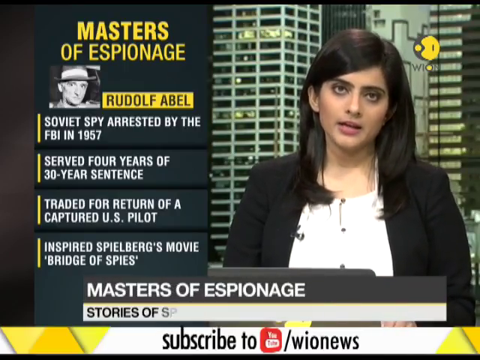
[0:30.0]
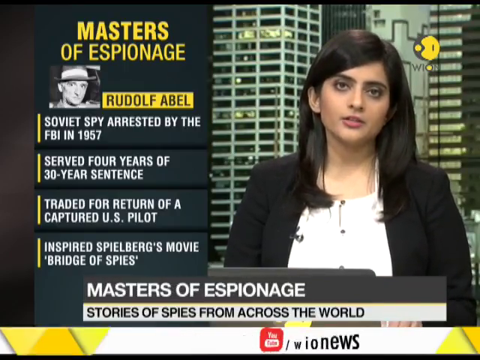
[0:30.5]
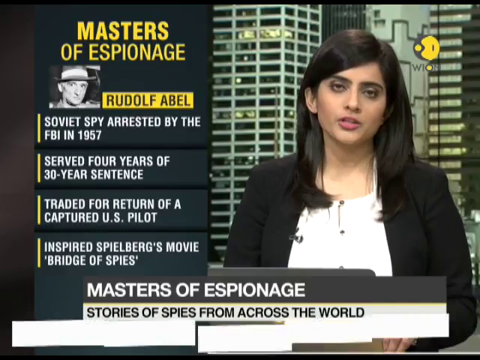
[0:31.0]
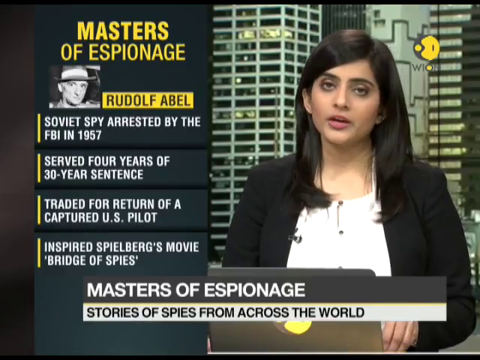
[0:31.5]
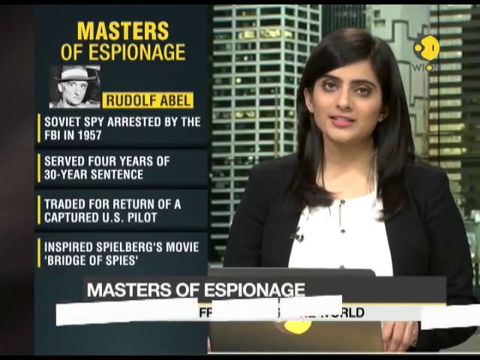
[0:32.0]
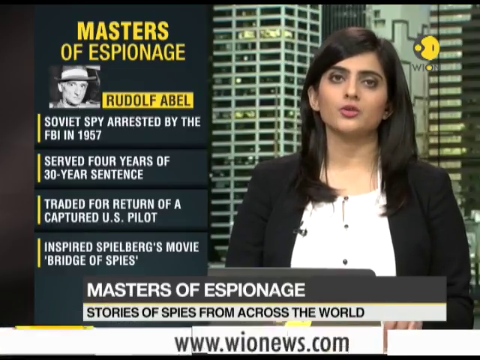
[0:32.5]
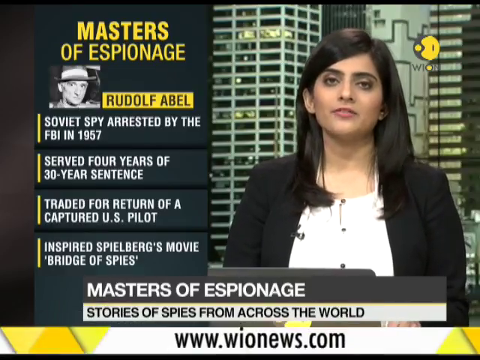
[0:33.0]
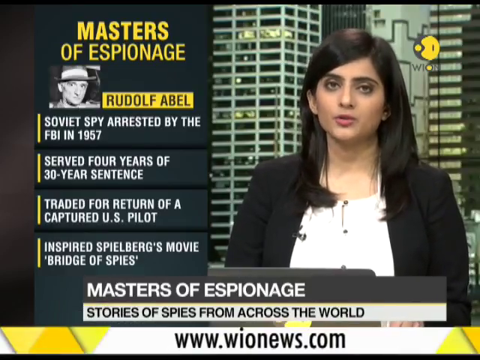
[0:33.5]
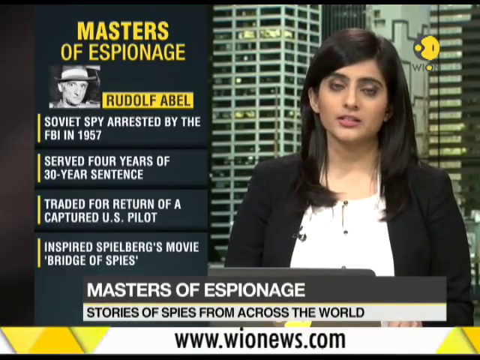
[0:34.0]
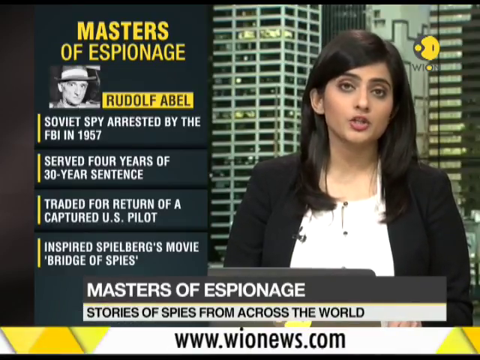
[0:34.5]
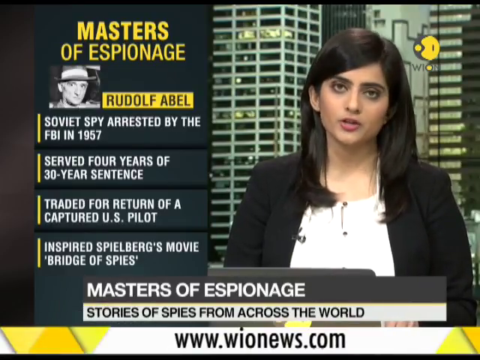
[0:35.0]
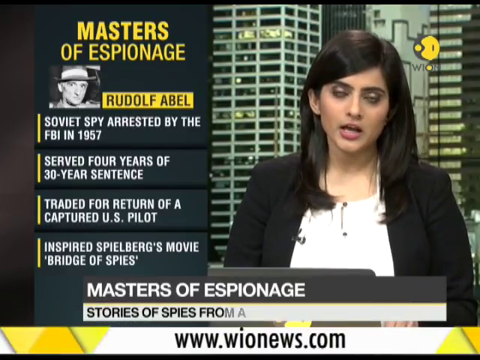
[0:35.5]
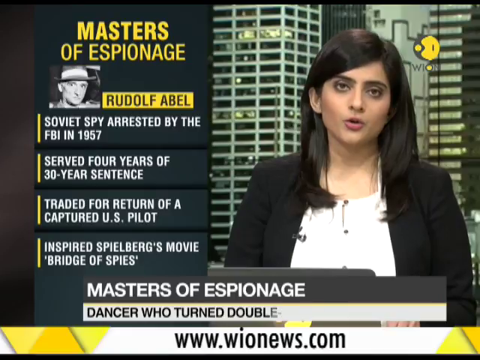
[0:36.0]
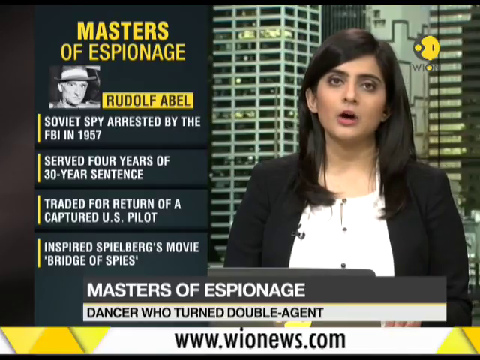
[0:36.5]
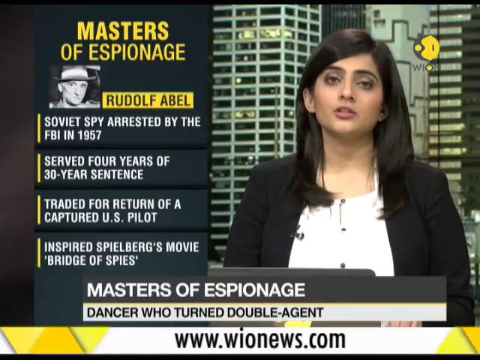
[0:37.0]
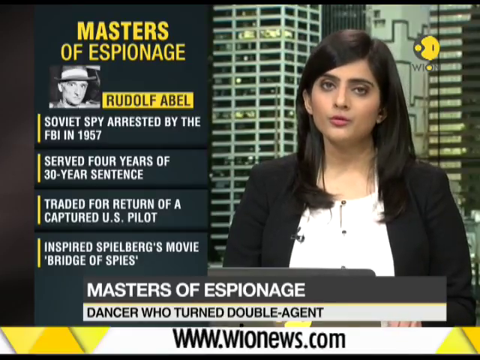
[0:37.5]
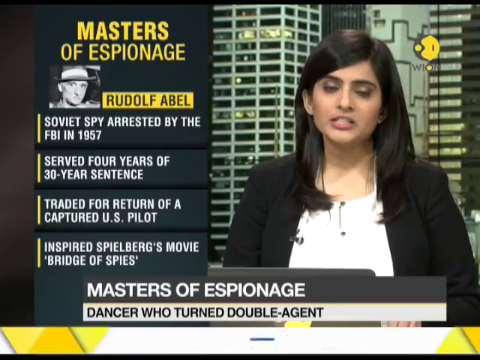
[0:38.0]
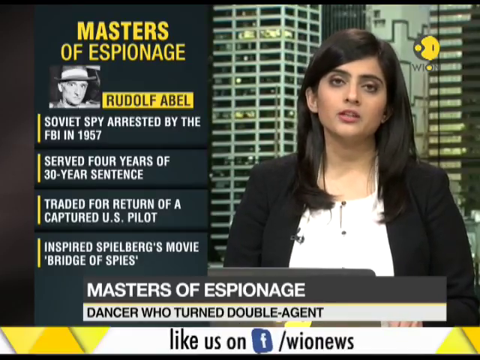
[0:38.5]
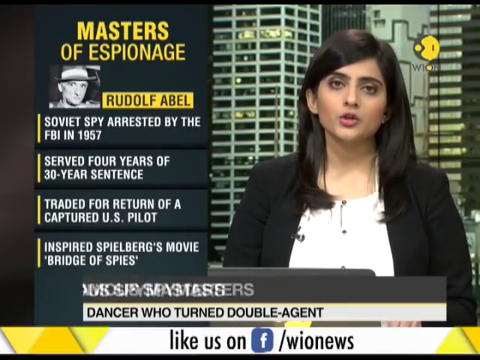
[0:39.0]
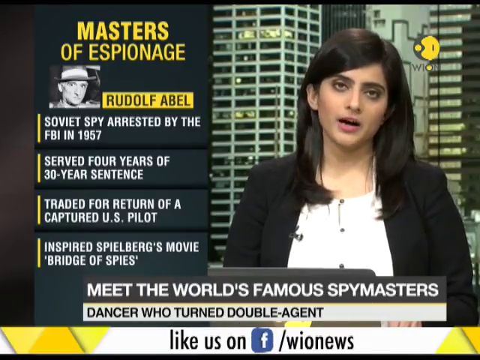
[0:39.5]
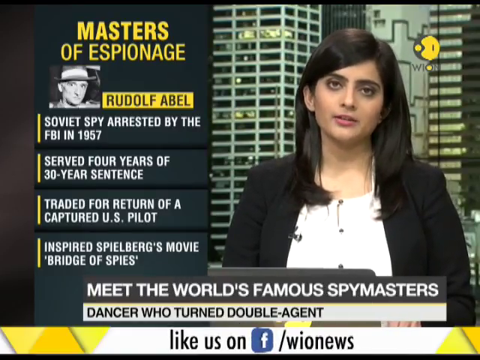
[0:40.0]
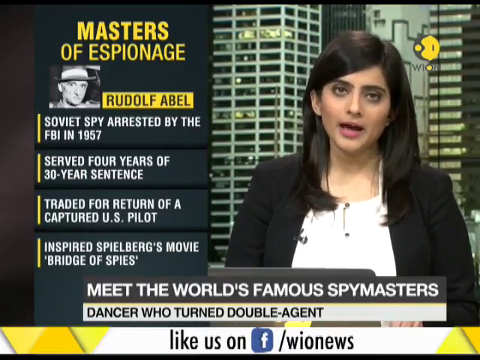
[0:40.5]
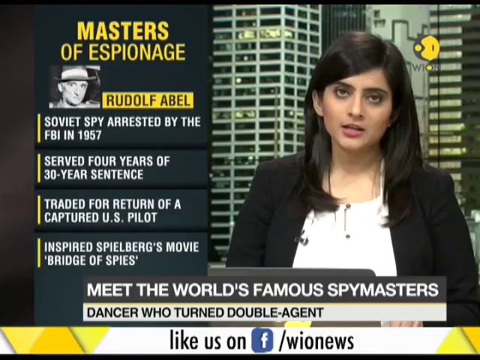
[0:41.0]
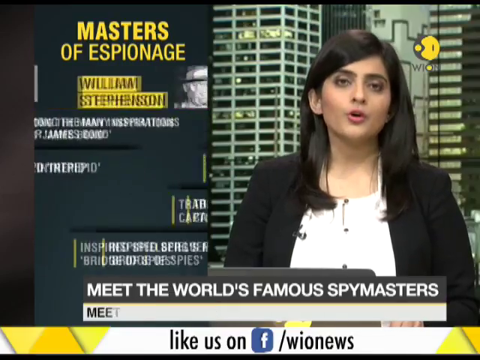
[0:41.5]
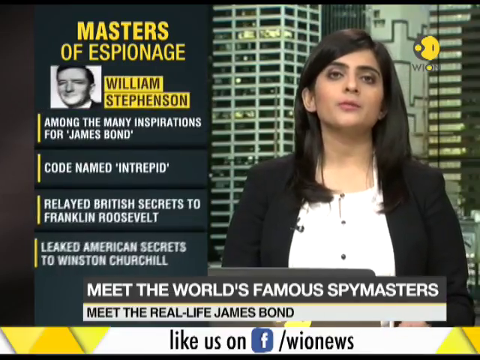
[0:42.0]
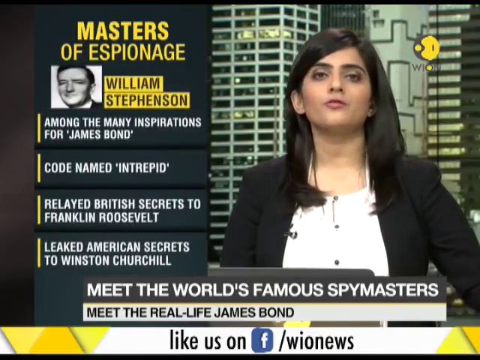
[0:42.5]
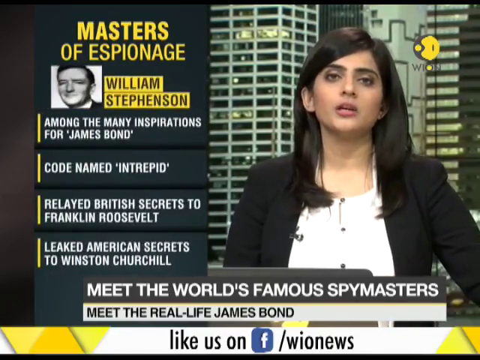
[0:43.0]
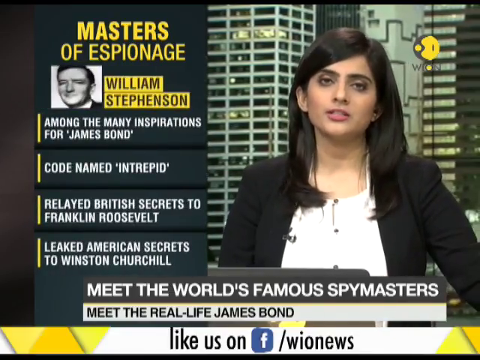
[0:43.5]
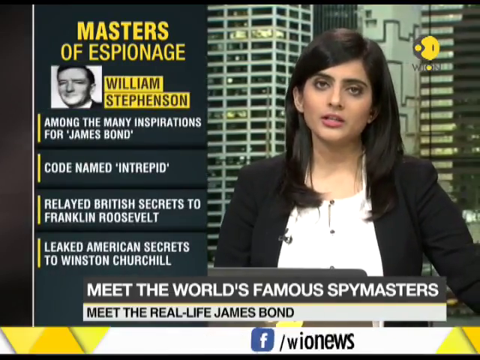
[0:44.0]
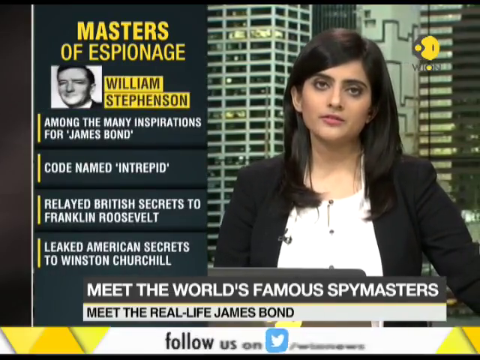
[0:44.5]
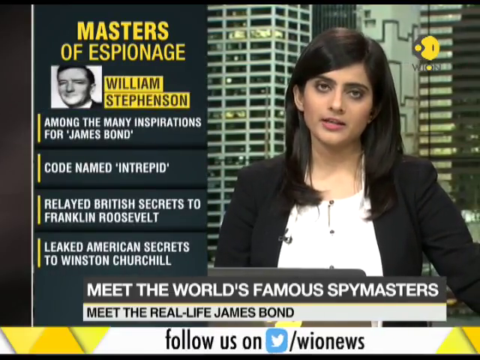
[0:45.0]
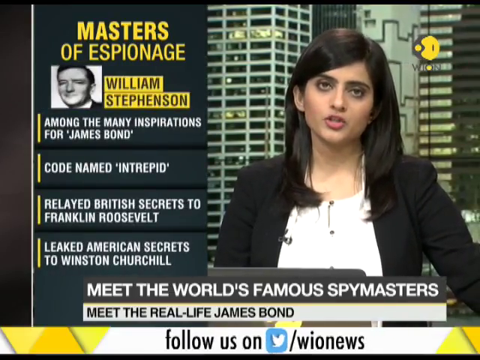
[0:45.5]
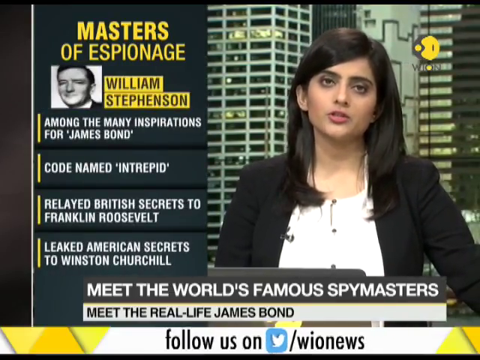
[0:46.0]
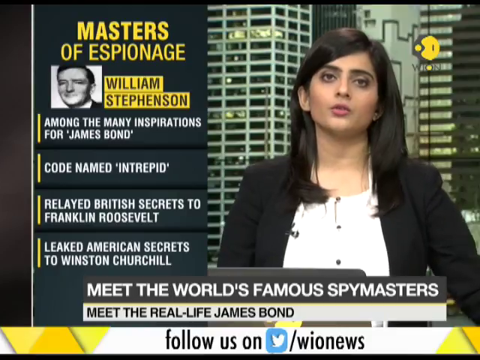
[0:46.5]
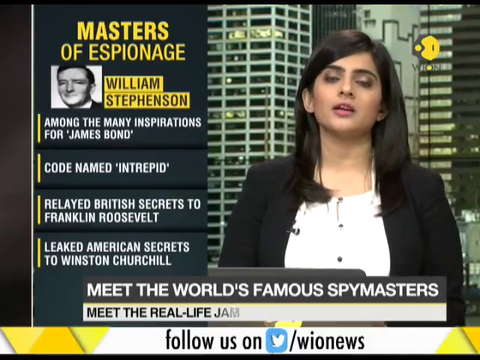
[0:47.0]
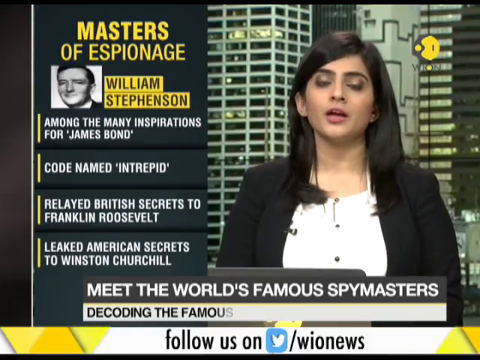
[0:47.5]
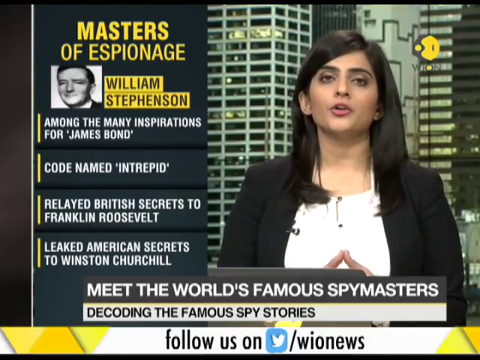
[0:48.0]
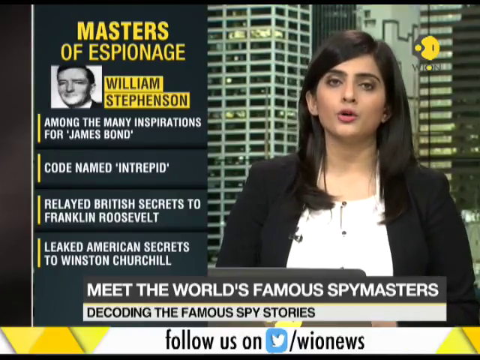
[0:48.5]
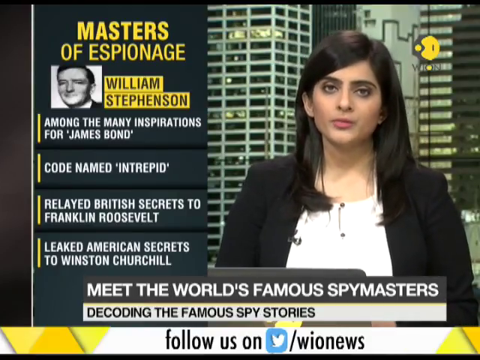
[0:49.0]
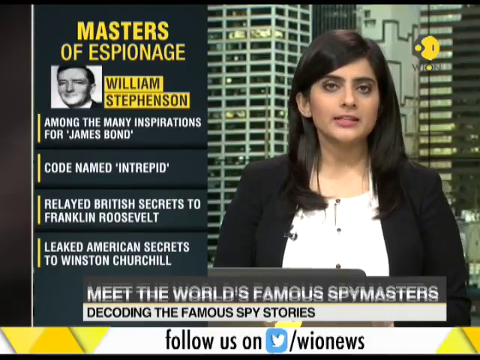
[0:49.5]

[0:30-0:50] A woman with long brown hair wears a black jacket with a microphone clipped to it and talks directly into the camera; behind her there seems to be a picture of a large city. At the bottom of the screen one label reads "Masters of espionage" and another below it reads "Stories of spies from across the world." A bar on the left side reads "Masters of espionage" and shows a picture of a man wearing a top hat with the name "Rodolf Abel" beside it and facts listed under the name. As the woman continues talking, the bottom labels change to "Meet the world's famous spy masters" and, on a white label below, "Dancer who turned double agent." The side bar now shows a different man's face with the name "William Stevenson."